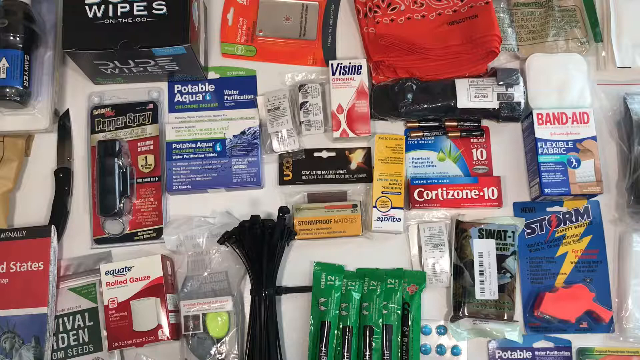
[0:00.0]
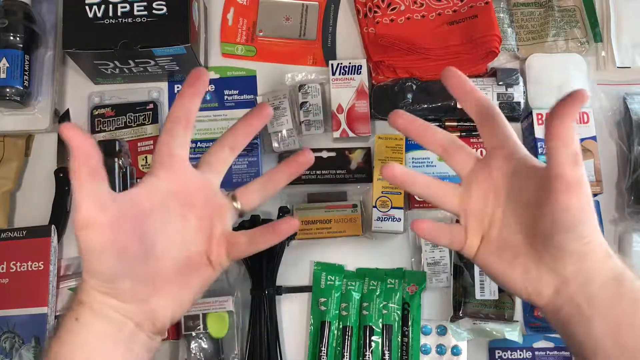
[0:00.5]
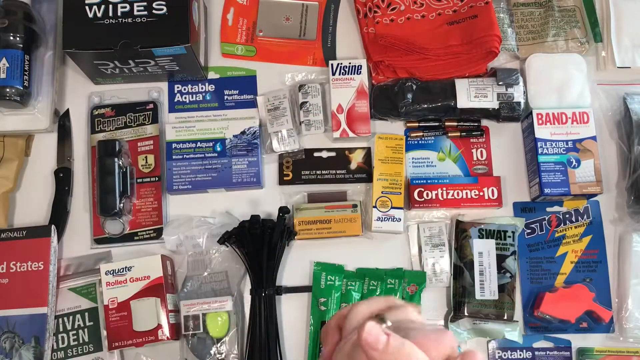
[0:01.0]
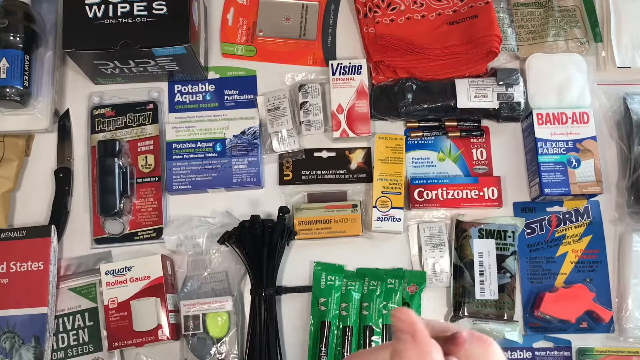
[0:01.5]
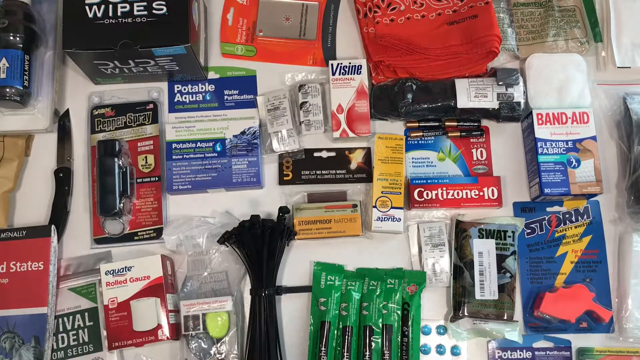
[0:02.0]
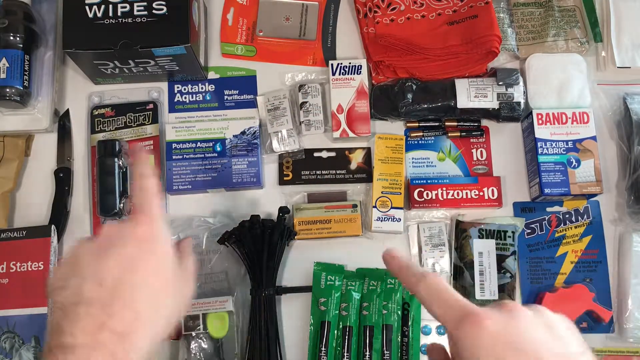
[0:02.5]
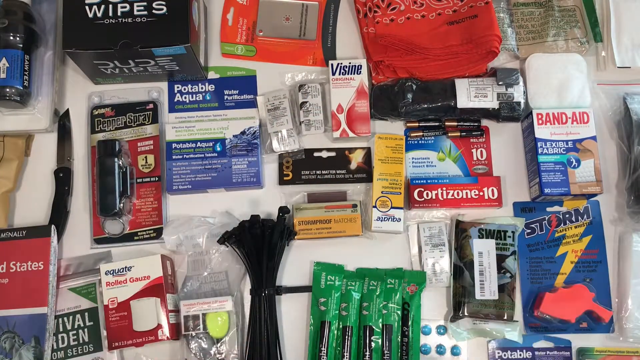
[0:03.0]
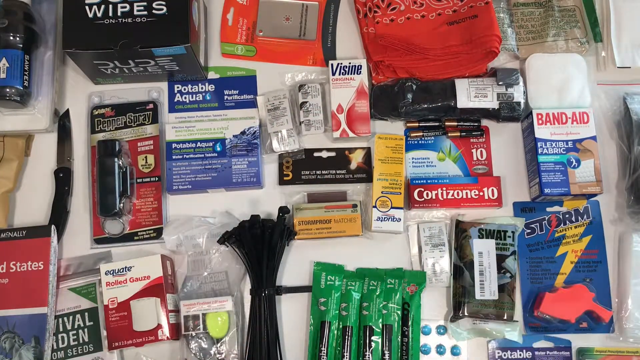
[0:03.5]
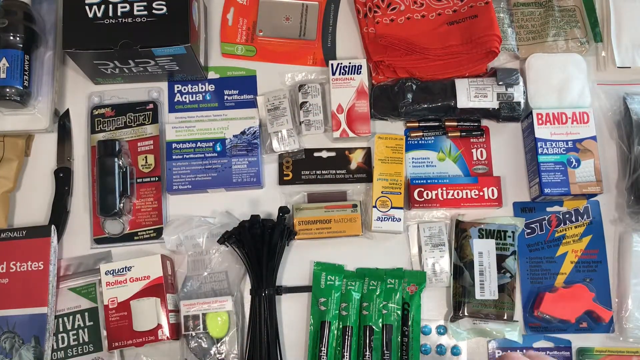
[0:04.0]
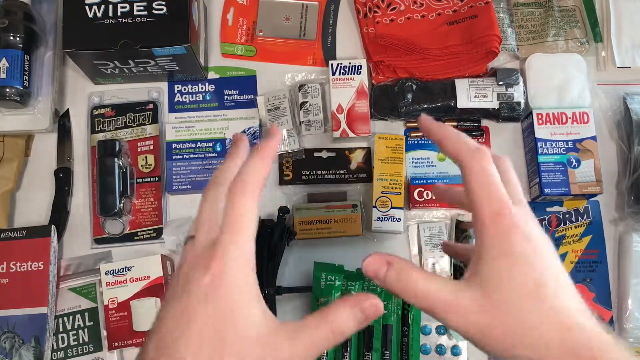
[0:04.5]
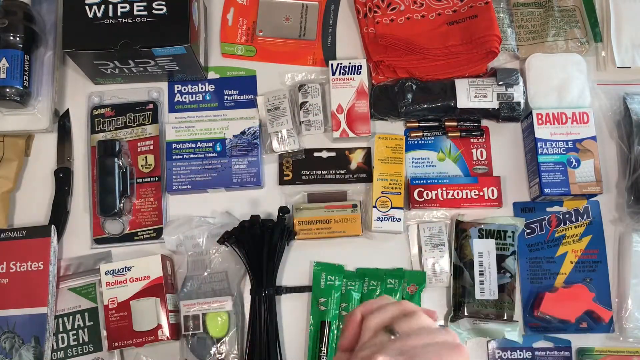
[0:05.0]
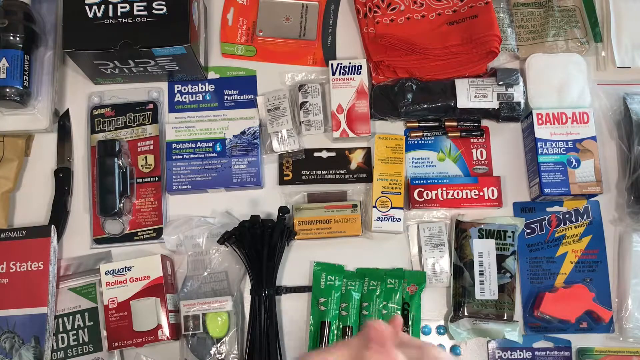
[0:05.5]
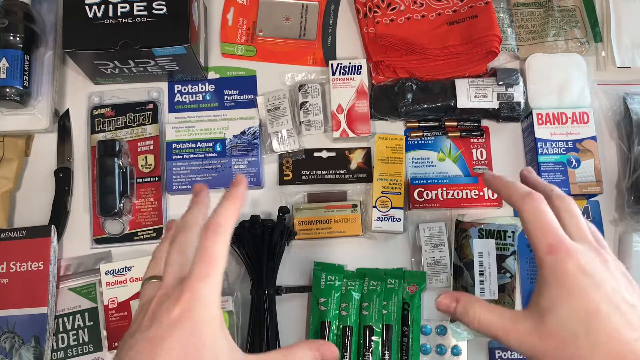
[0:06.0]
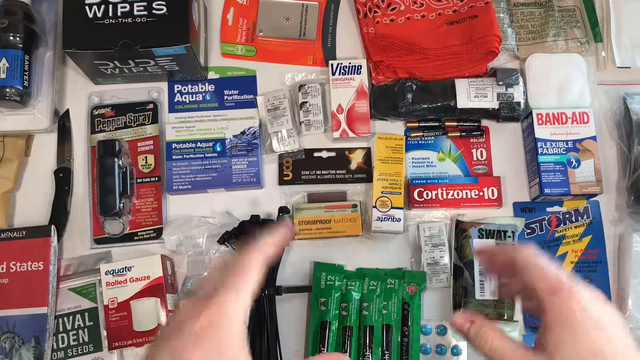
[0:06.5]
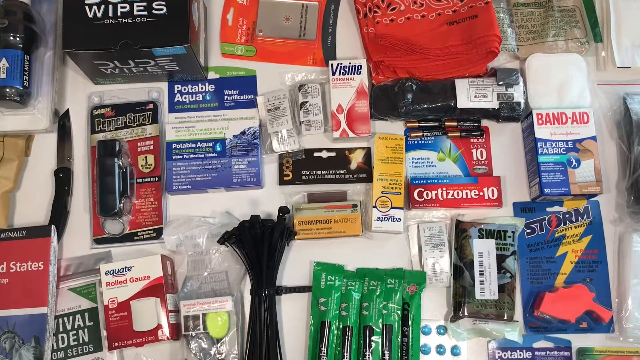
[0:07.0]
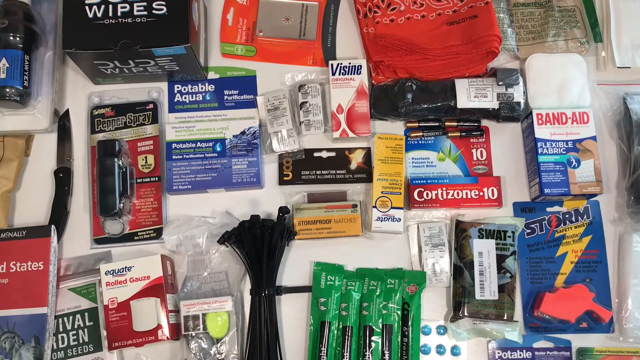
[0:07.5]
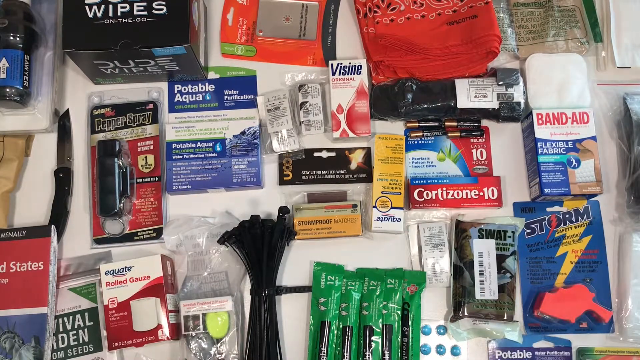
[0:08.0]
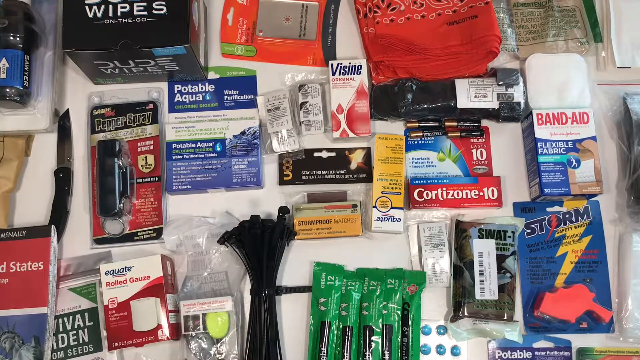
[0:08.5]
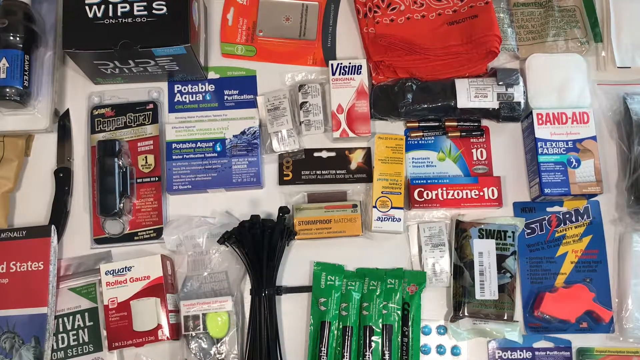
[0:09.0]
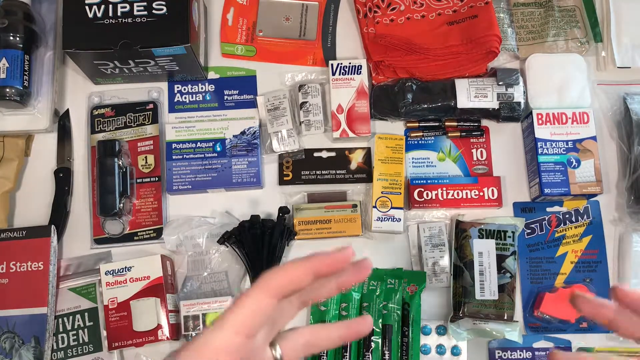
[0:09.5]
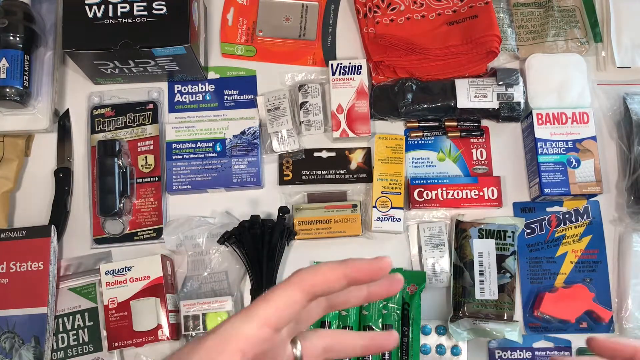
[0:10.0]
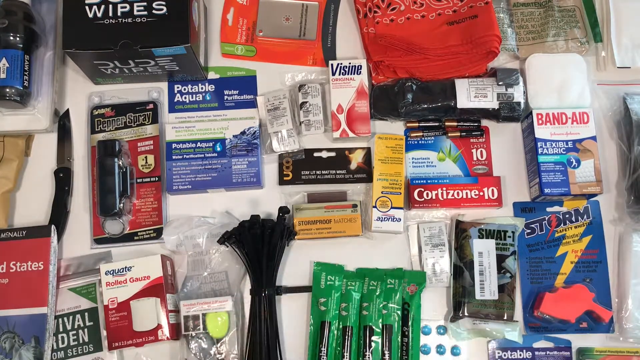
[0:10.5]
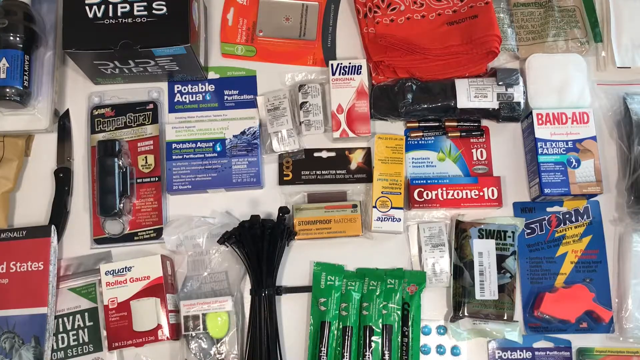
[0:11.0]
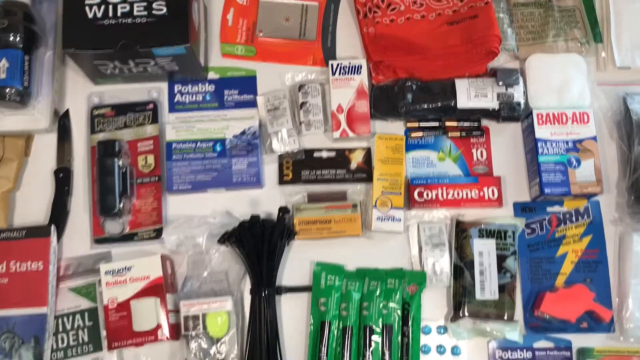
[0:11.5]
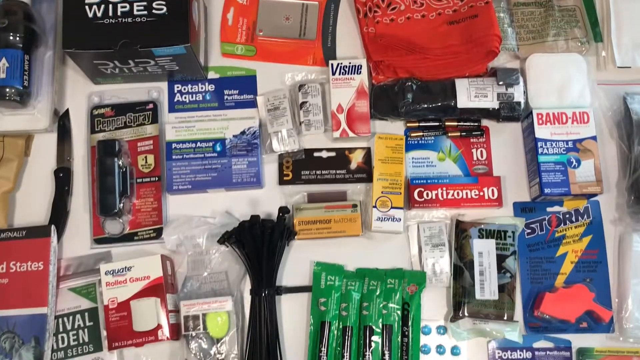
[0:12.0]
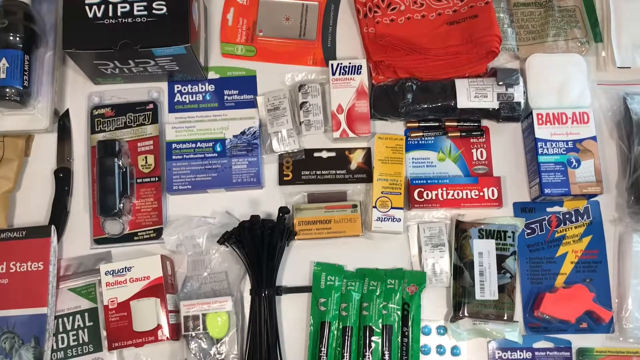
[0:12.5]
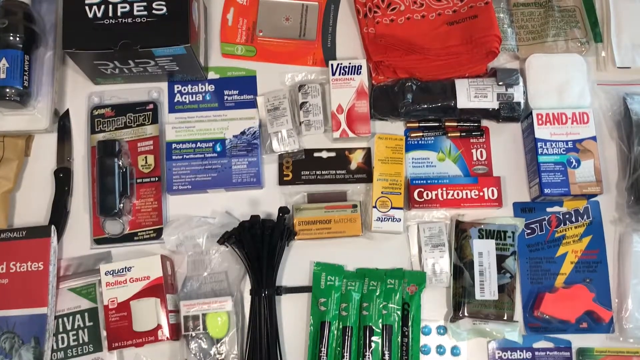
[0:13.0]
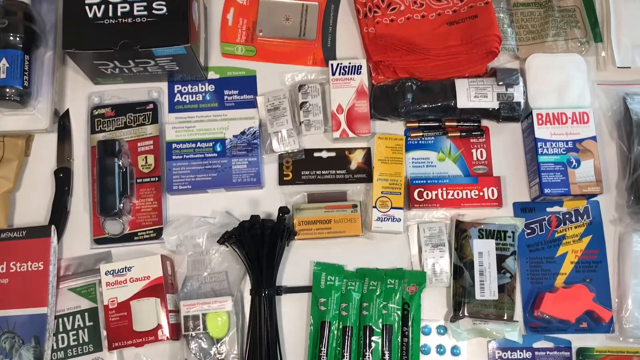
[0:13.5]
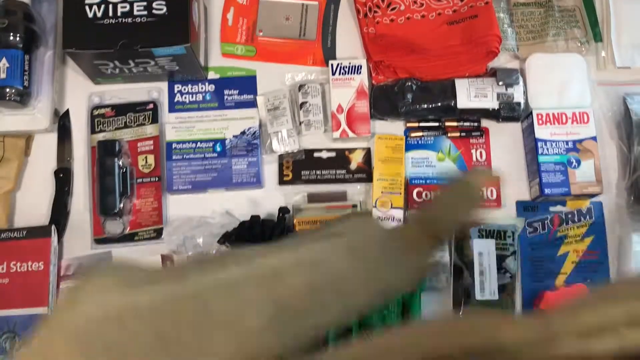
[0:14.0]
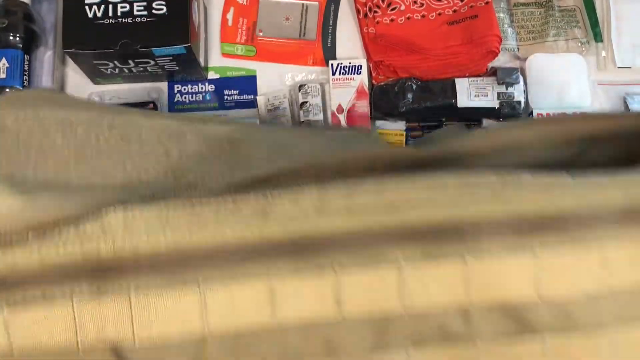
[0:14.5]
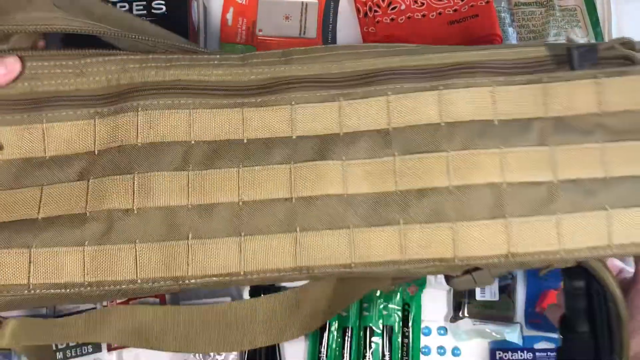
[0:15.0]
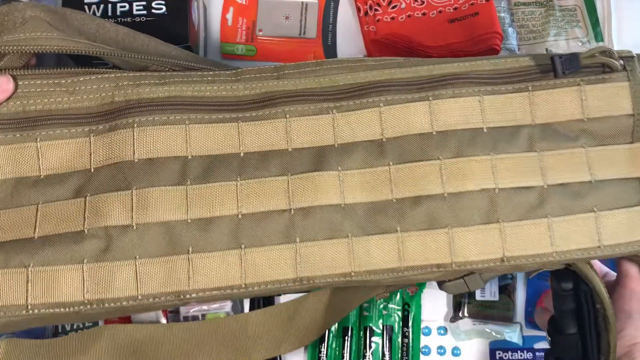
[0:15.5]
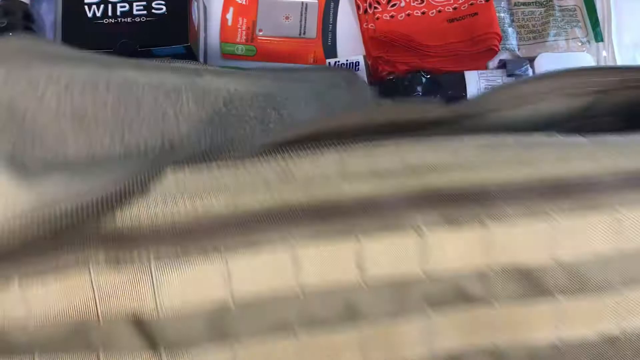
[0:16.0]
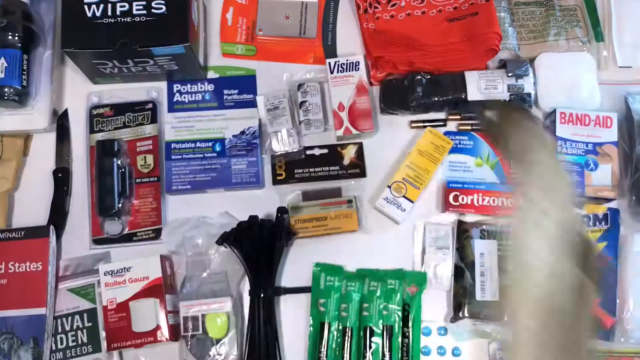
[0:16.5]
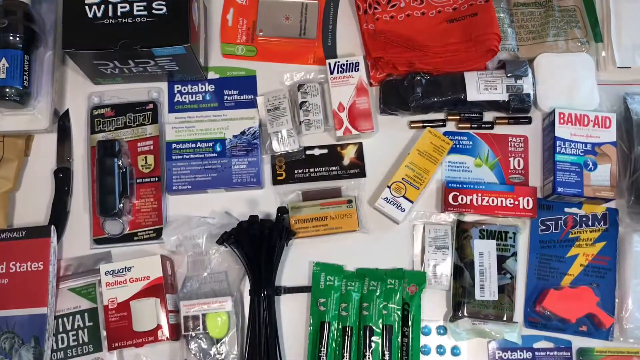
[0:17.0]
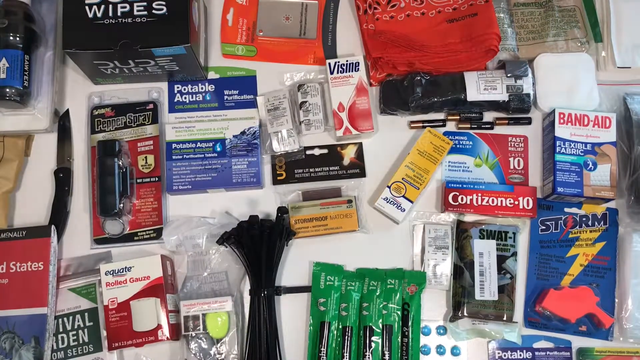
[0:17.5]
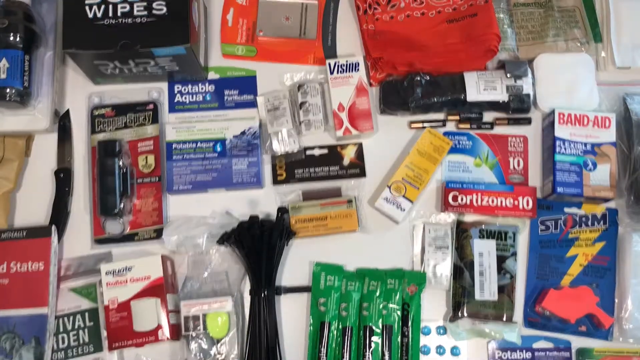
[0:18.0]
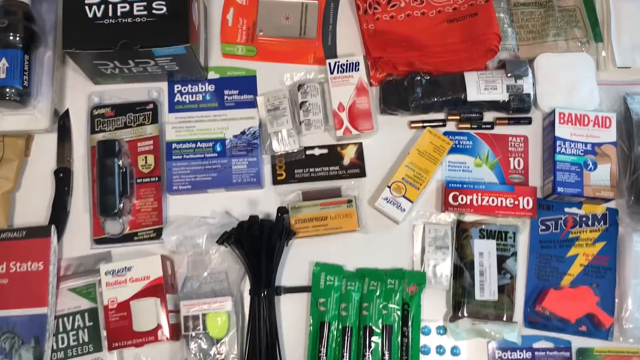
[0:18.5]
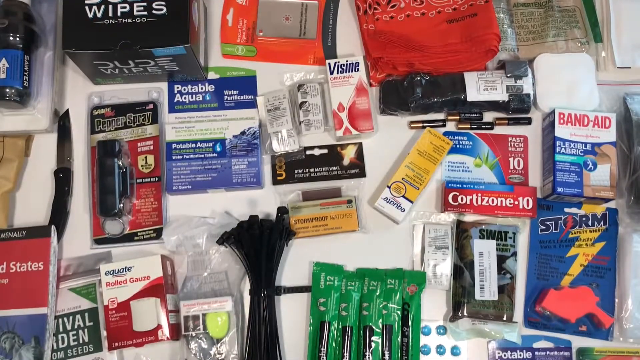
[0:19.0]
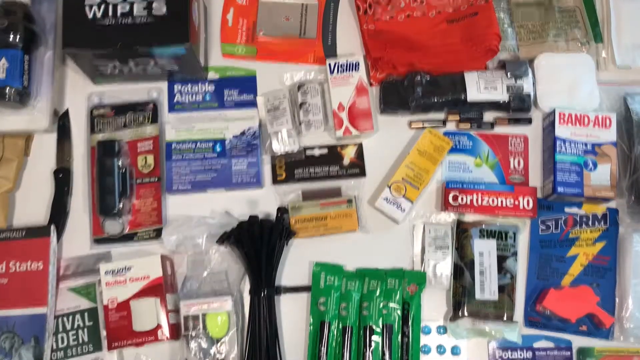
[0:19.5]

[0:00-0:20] Several health care products lie on top of a table, filling the screen from left to right: wipes, band-aids, potable aqua, cortisone 10 cream and rolled gauze, among other products. Two pairs of hands come up from the bottom center of the screen with their palms showing, then turn over, and the hands keep popping up in the screen and gesturing. The gesturing hands are Caucasian and look to be the hands of a woman. A piece of gold and tan fabric, which looks to be some sort of curtain material, briefly comes across the screen and goes back away at the bottom of the screen. The fabric covers the screen from the bottom about three quarters of the way up, but not all the way to the top.